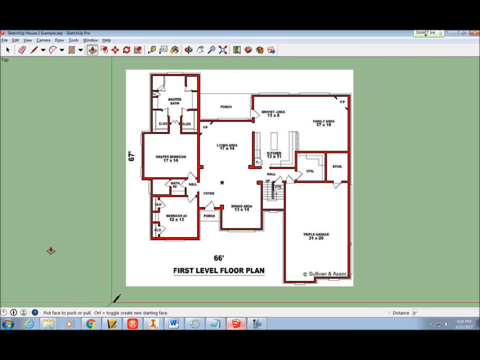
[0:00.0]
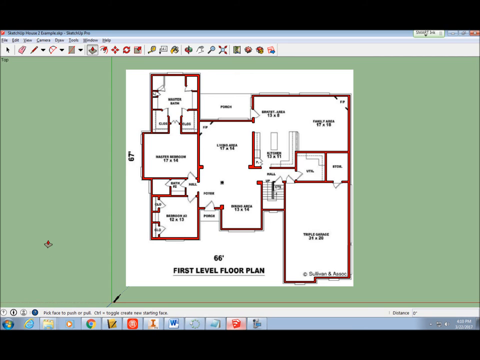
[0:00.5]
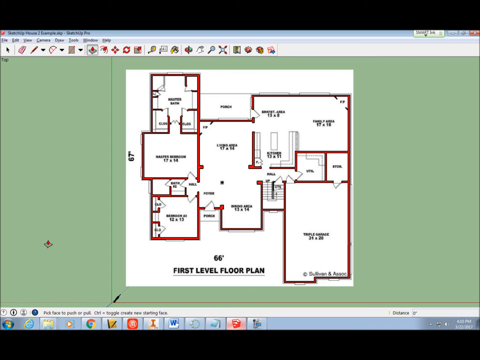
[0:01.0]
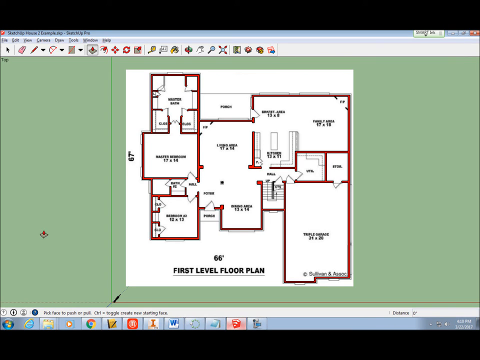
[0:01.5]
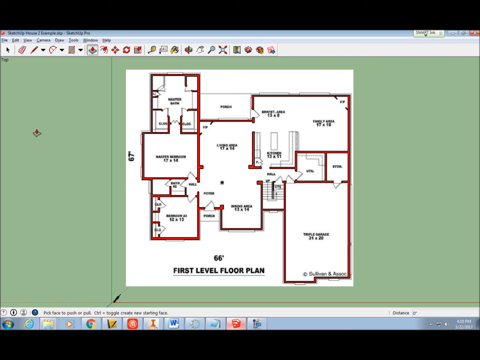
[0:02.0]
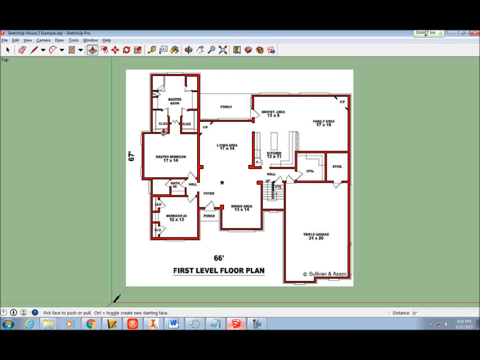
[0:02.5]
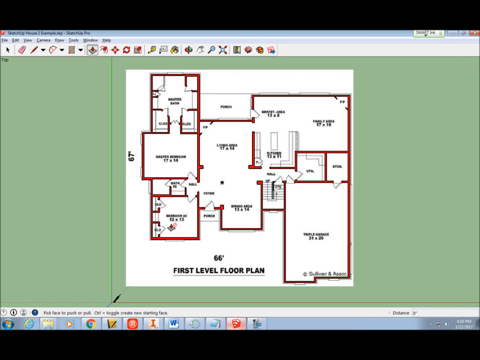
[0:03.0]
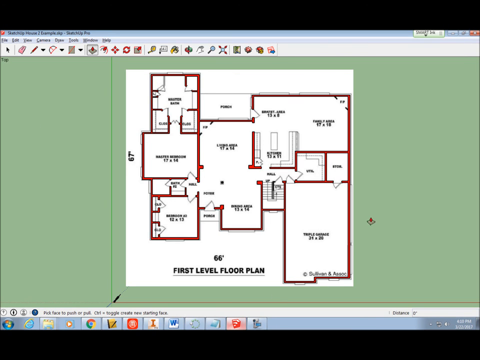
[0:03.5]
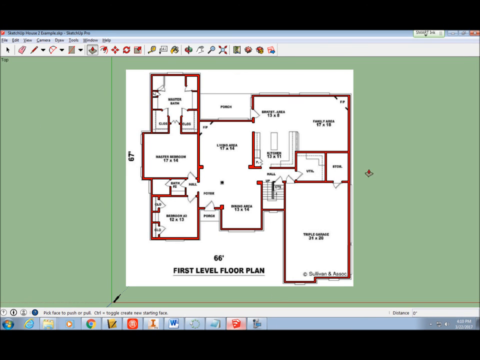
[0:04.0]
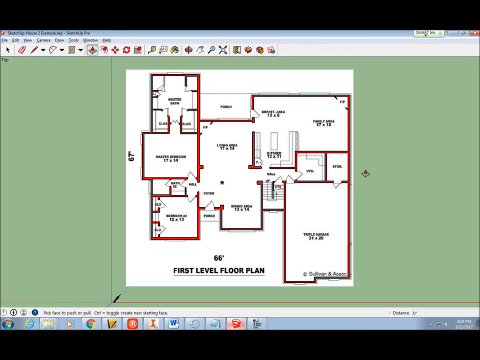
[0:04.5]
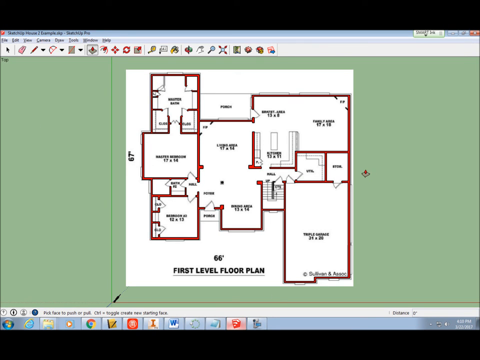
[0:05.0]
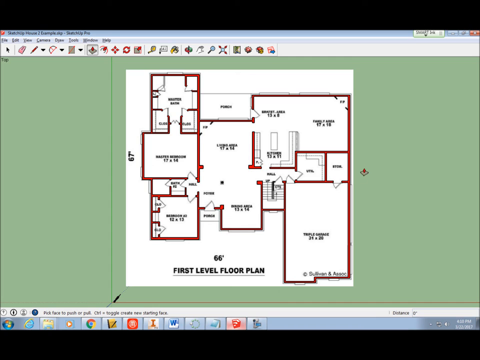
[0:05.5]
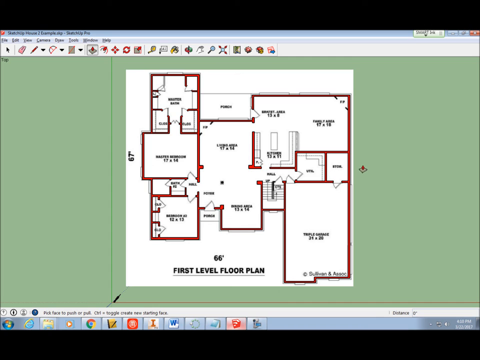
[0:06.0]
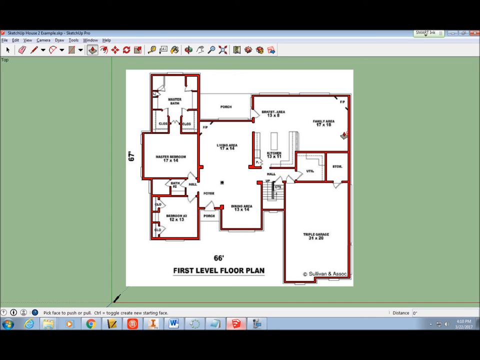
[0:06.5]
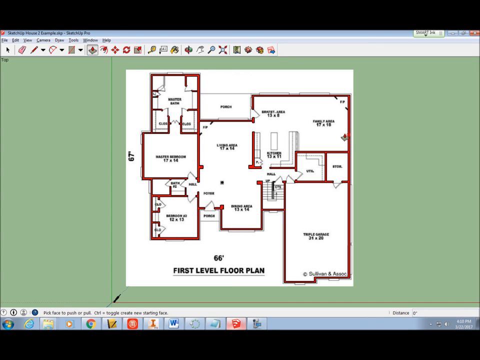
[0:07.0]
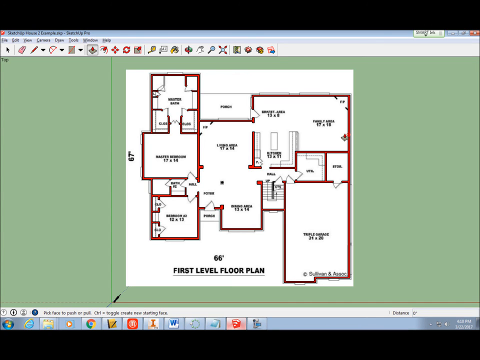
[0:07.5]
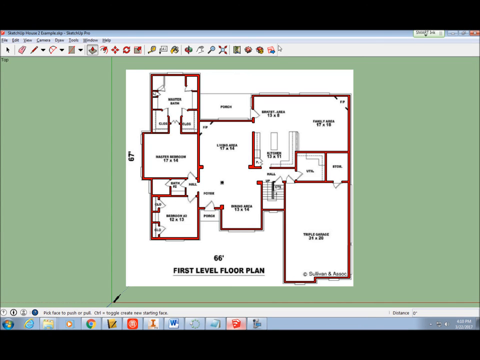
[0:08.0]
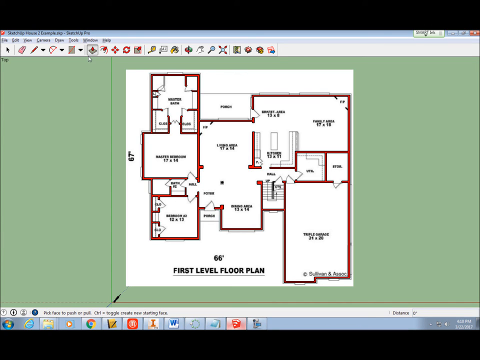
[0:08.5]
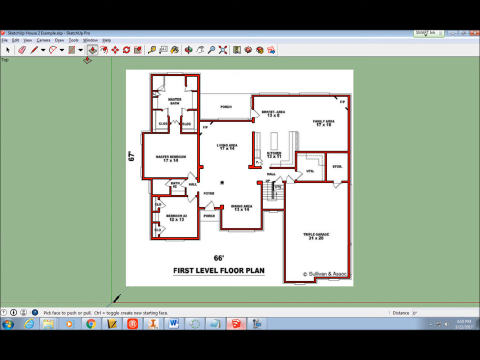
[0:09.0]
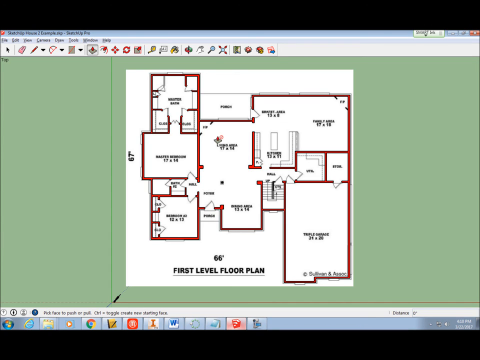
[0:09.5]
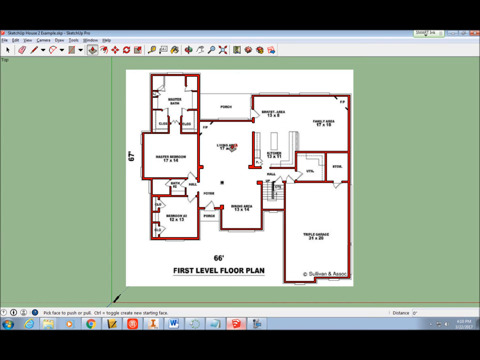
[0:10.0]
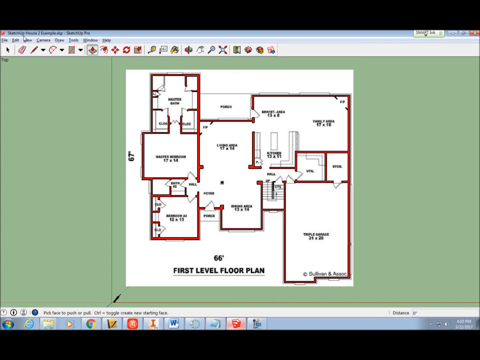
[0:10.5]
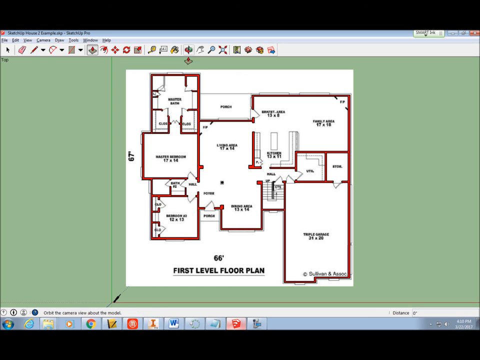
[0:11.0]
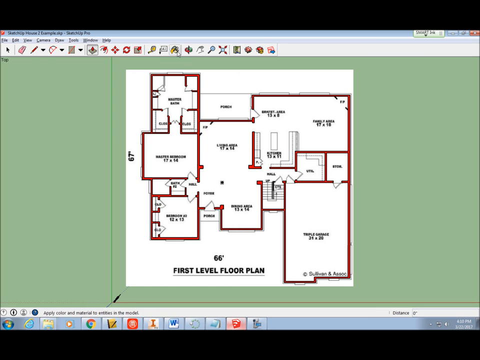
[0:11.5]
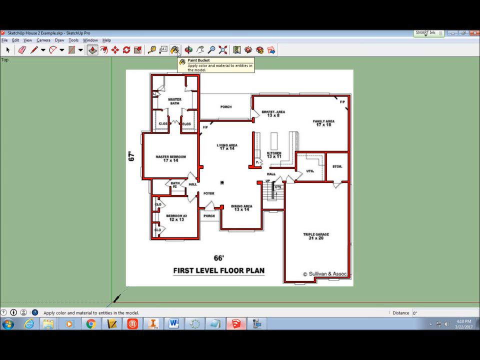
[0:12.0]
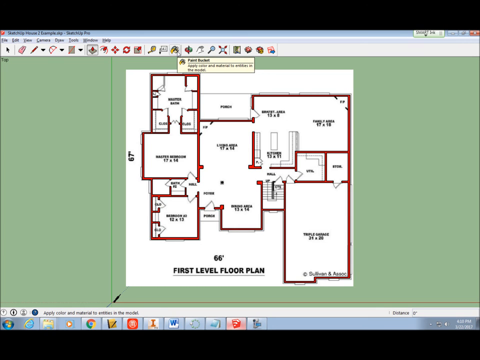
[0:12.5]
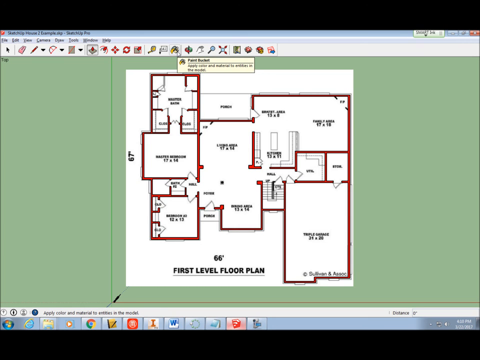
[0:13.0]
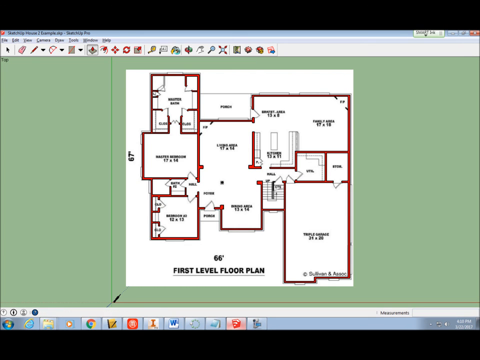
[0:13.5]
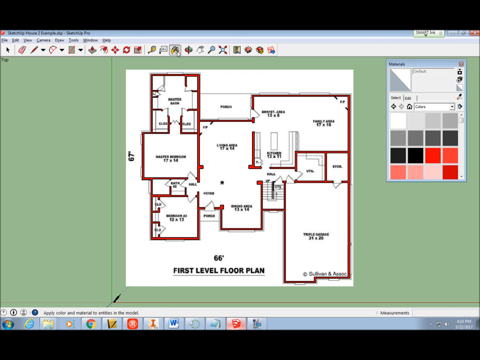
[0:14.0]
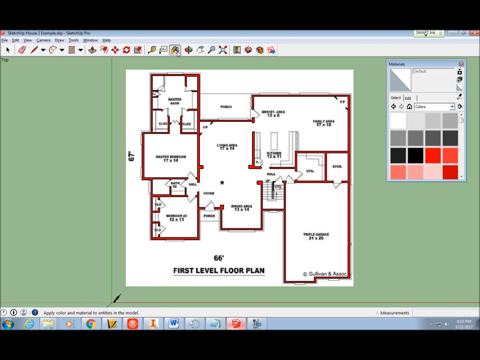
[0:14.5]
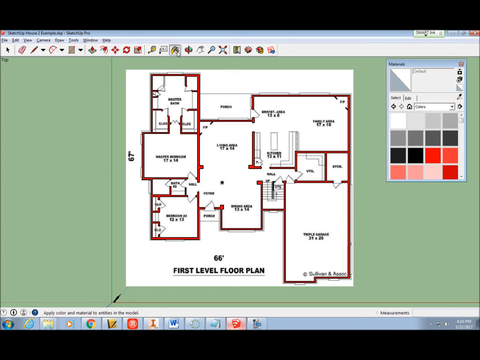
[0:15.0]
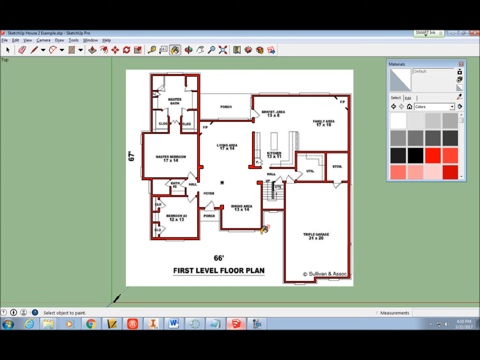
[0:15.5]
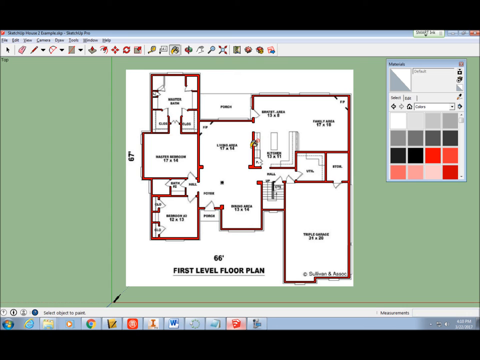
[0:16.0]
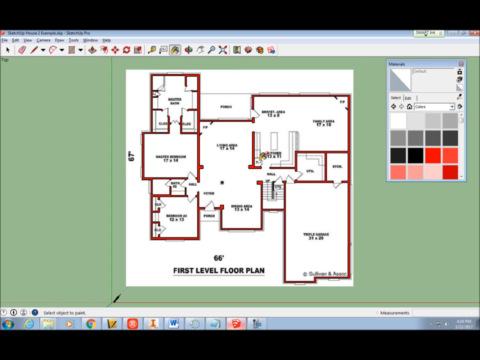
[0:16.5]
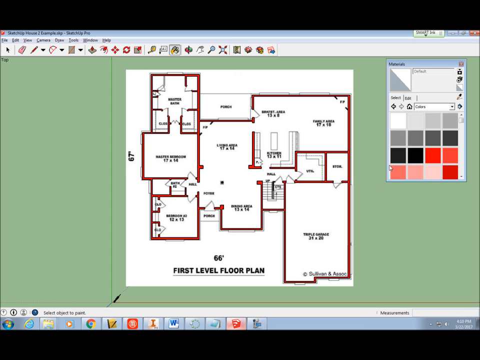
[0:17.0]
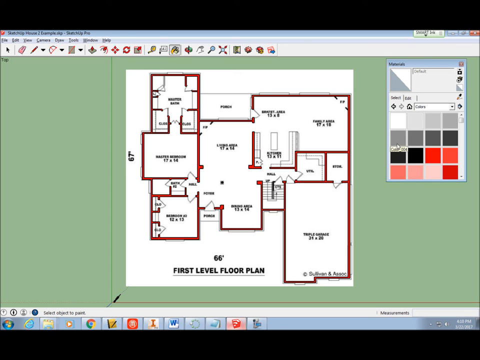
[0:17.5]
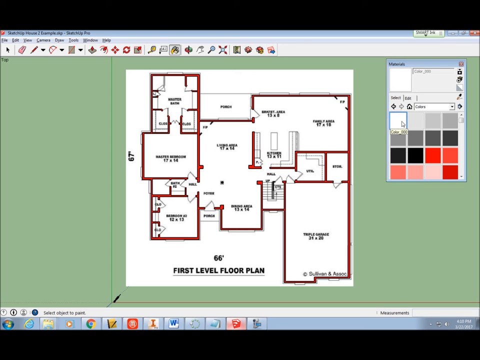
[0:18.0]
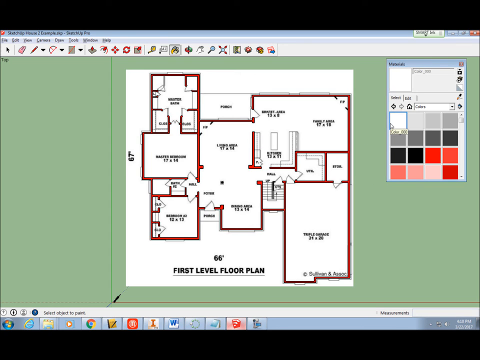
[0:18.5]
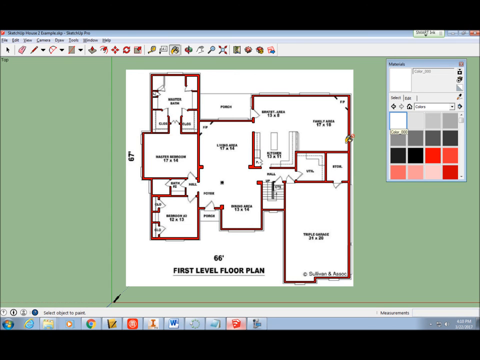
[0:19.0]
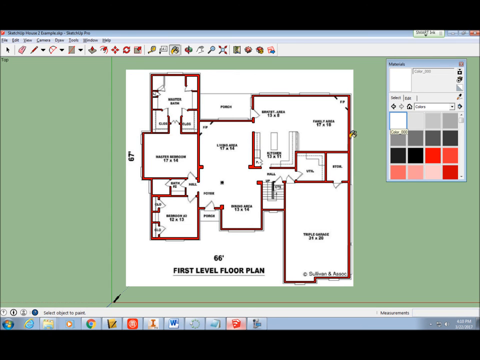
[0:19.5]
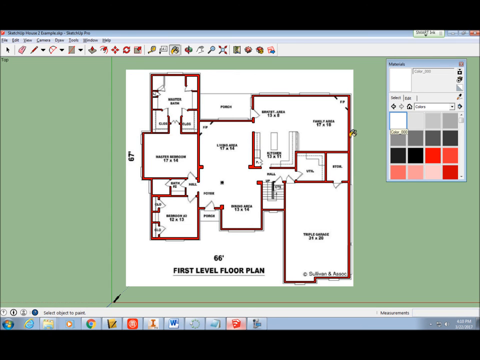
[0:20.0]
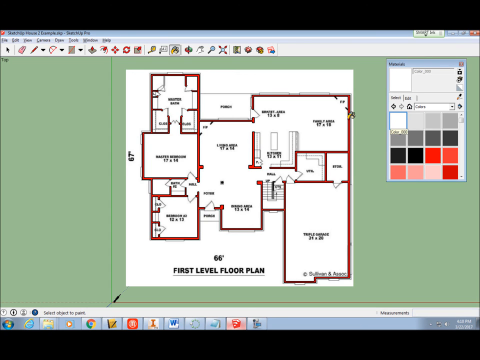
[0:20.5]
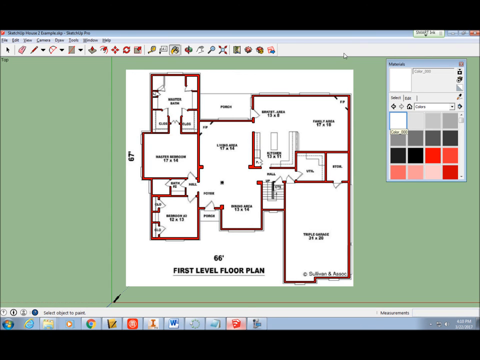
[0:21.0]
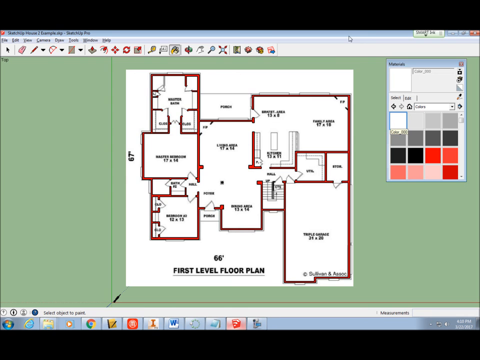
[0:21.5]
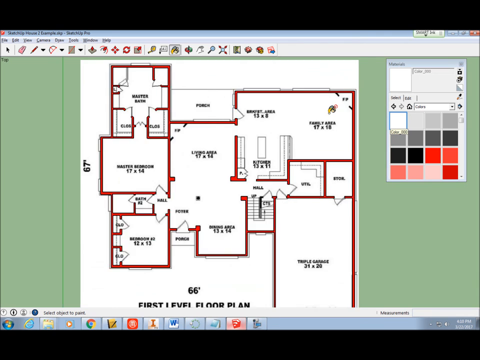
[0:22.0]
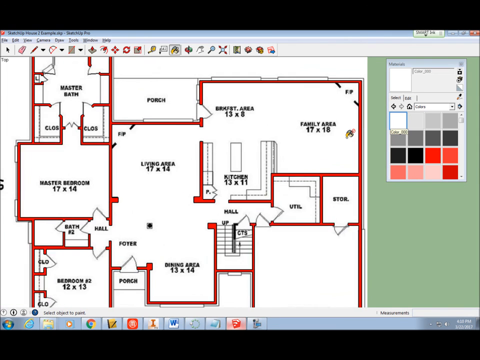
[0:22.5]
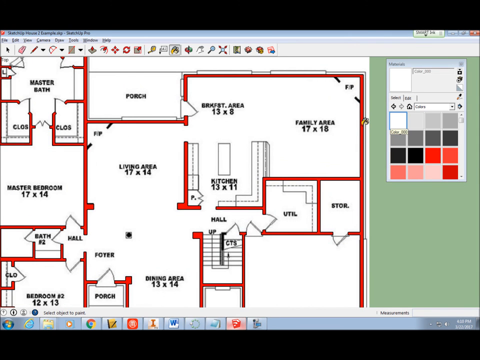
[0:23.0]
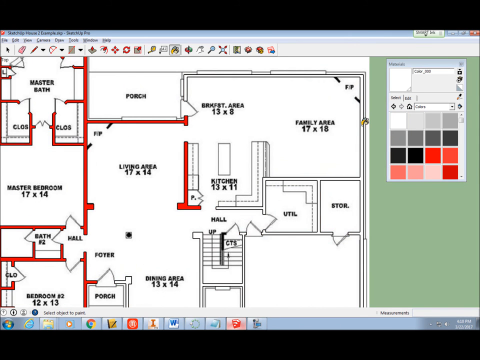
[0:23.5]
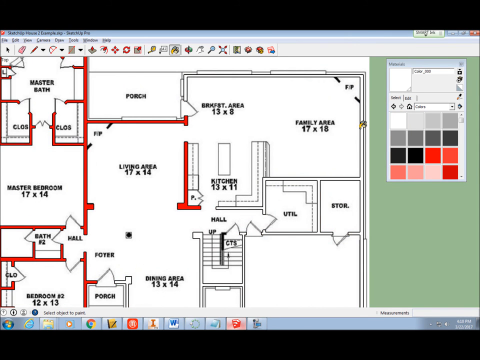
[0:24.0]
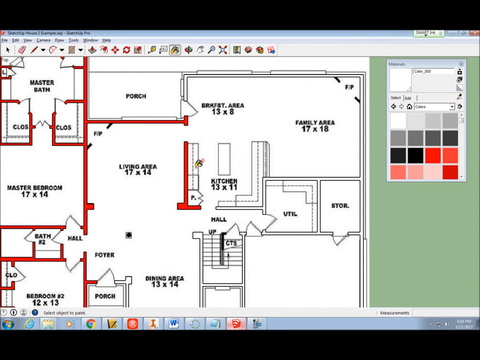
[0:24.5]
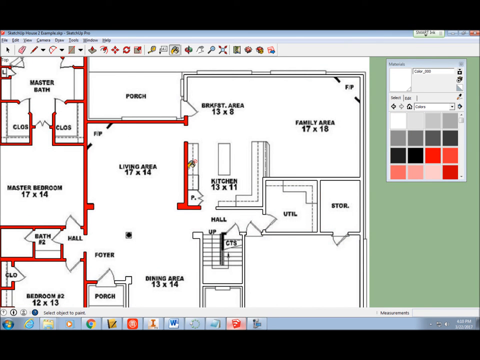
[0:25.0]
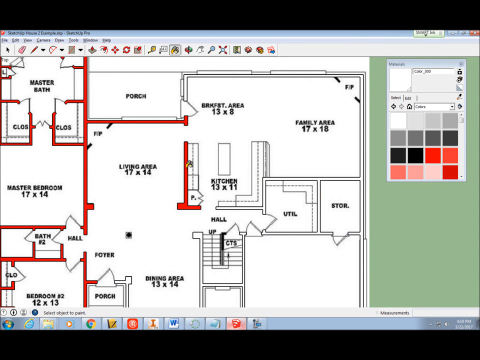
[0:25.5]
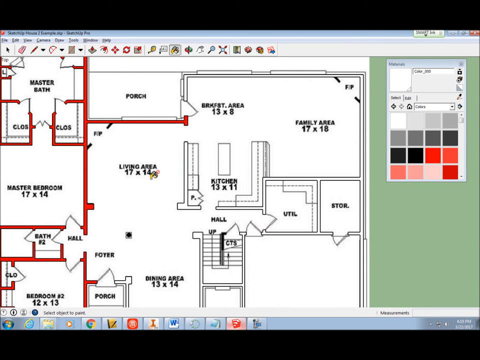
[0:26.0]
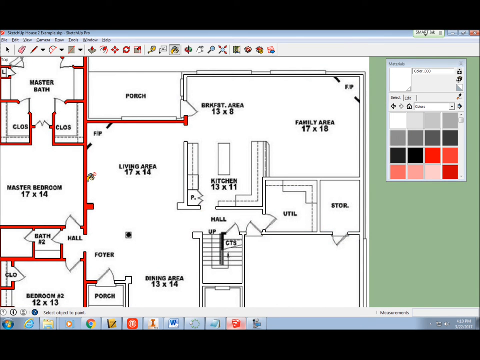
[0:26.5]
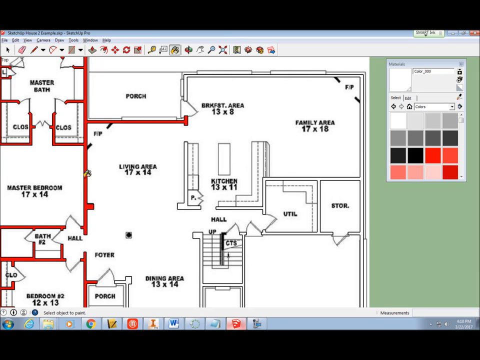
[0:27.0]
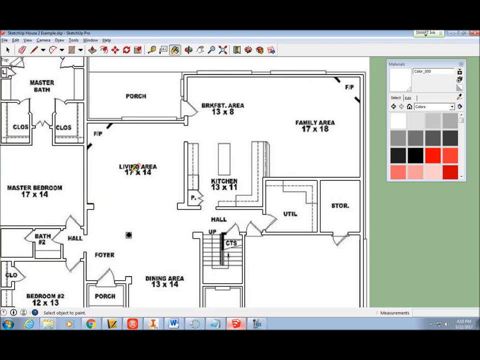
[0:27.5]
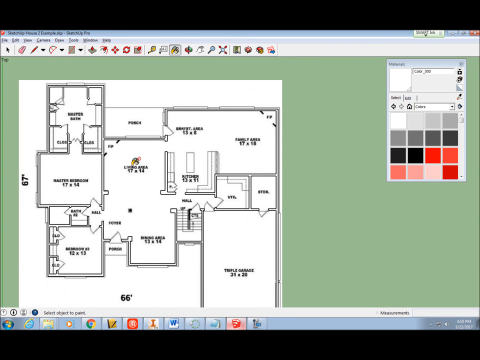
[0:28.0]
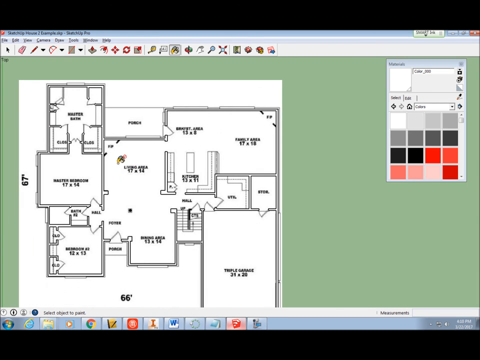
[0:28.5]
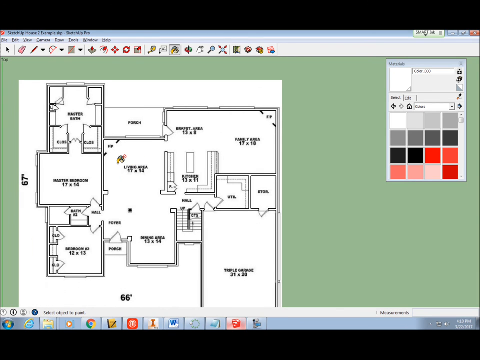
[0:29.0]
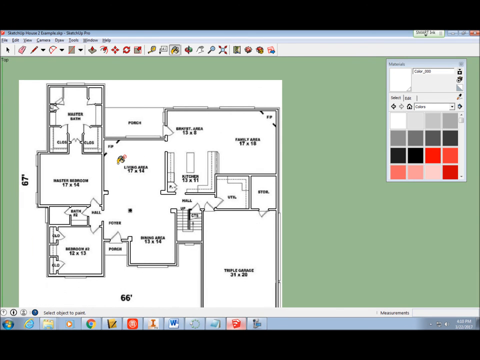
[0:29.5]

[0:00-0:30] A floor plan is being created in some sort of 3D modeling software, with the person's entire computer screen visible as they share it. They are working on the first level floor plan, which has several different areas for the house. The mouse first hovers from left to right, kind of swooping in a U shape, then goes over the top in an N shape before clicking on materials. After a text box opens, a color is selected. The mouse slides up toward the outside edge and the view zooms in on a family area, where the red border colors are unclicked and changed to white. The view then zooms in on the living area, with the mouse pointing that way, and the black borders there are also changed to white. Finally the view zooms out of the floor plan.